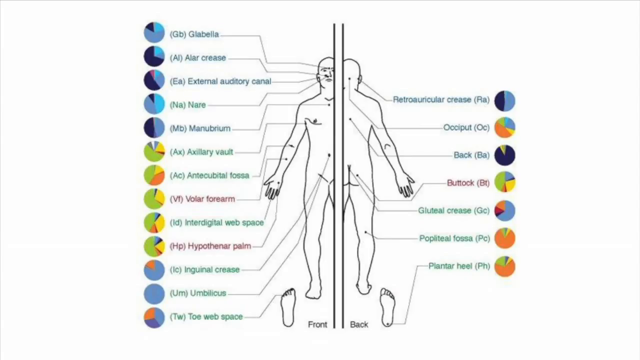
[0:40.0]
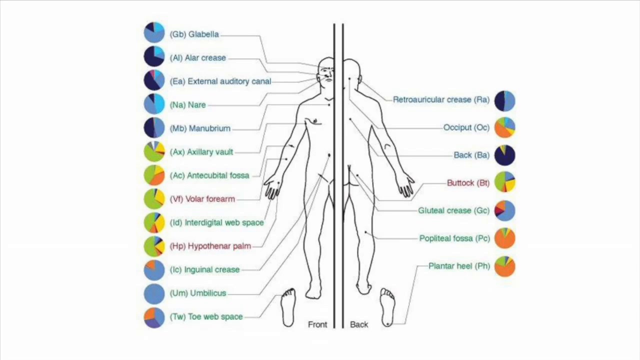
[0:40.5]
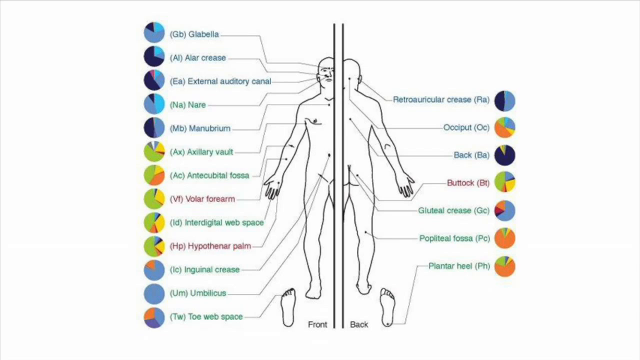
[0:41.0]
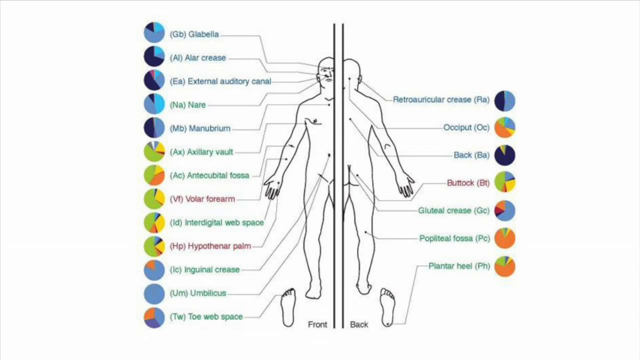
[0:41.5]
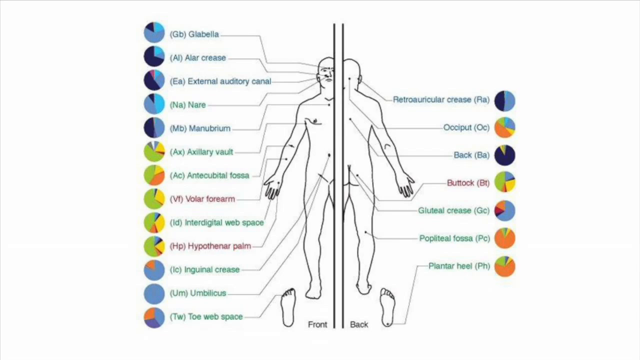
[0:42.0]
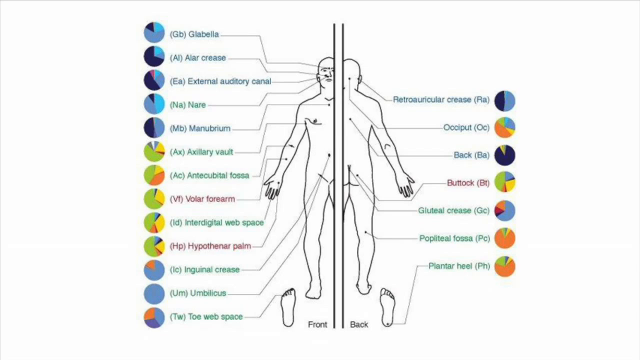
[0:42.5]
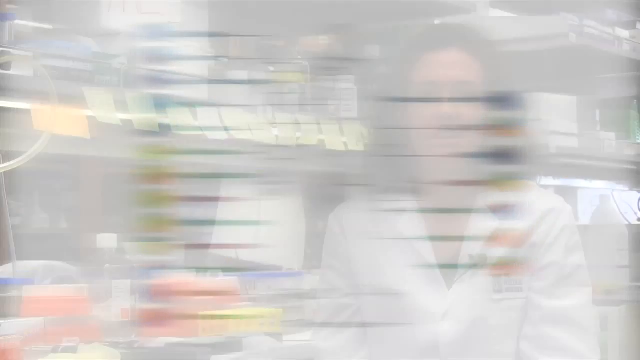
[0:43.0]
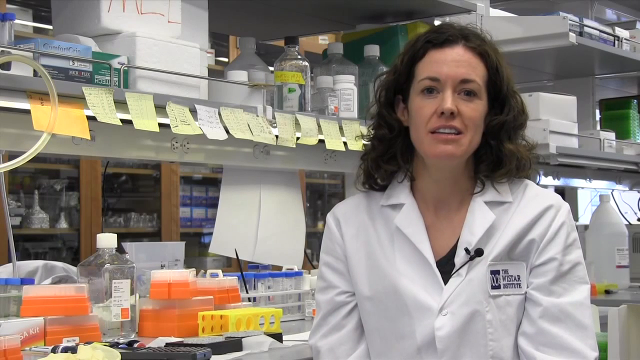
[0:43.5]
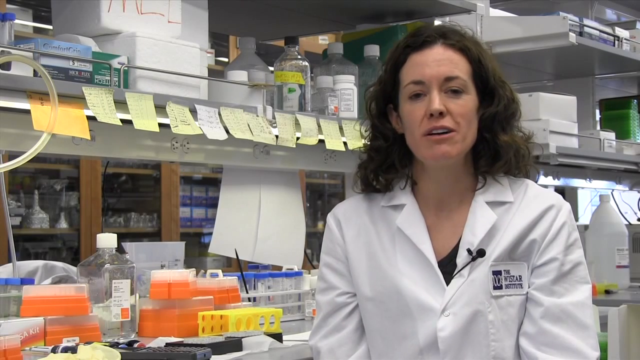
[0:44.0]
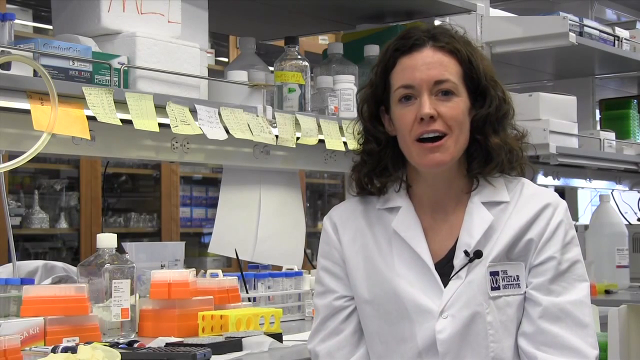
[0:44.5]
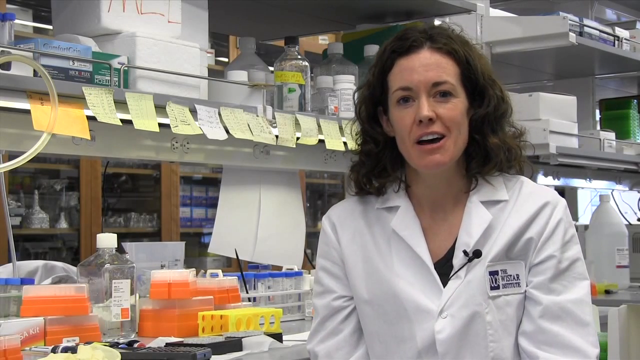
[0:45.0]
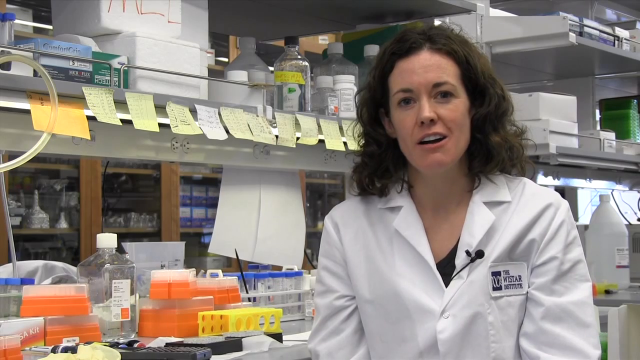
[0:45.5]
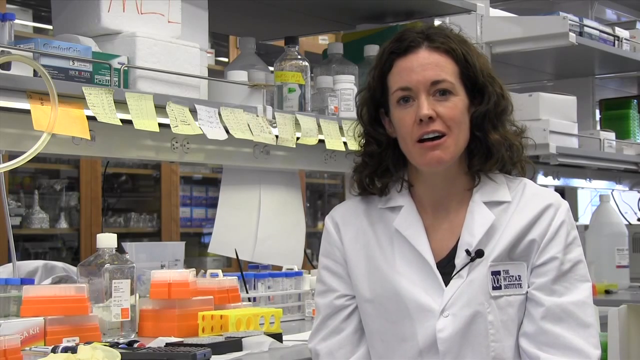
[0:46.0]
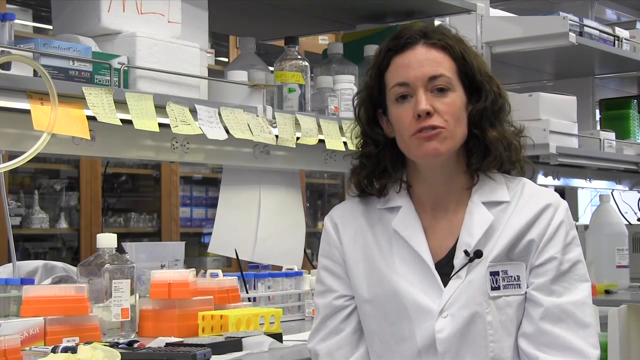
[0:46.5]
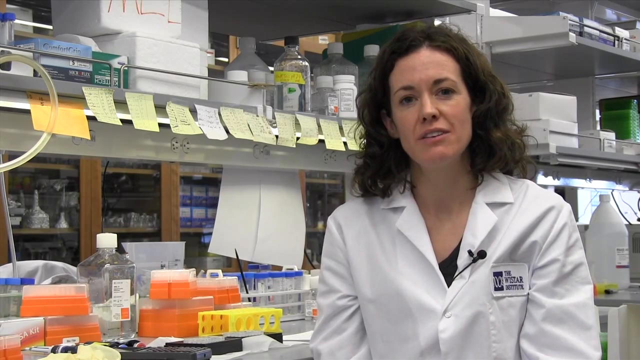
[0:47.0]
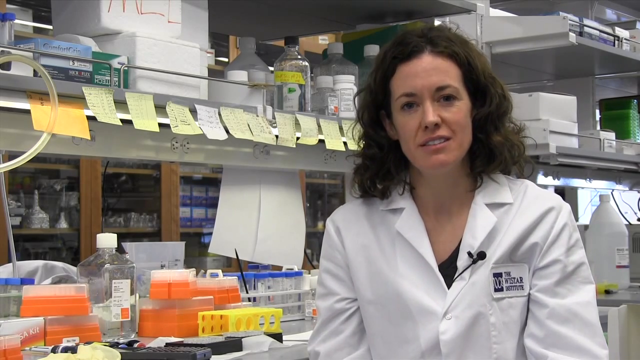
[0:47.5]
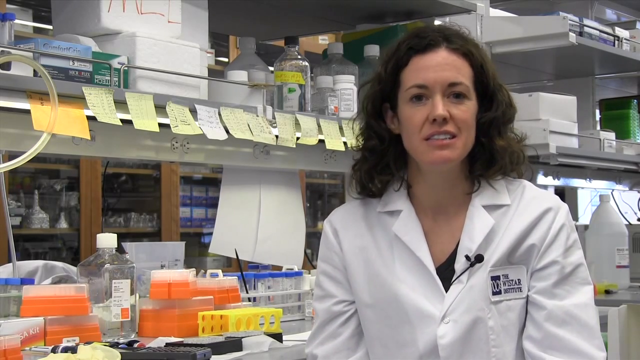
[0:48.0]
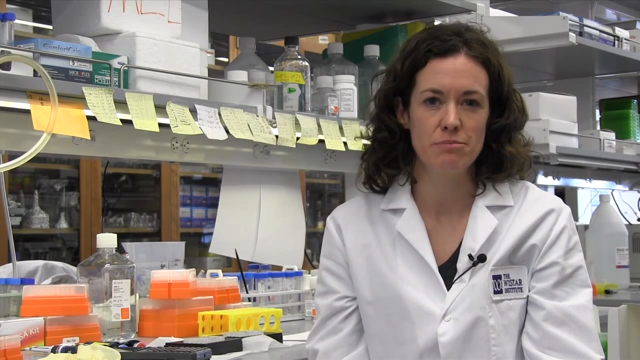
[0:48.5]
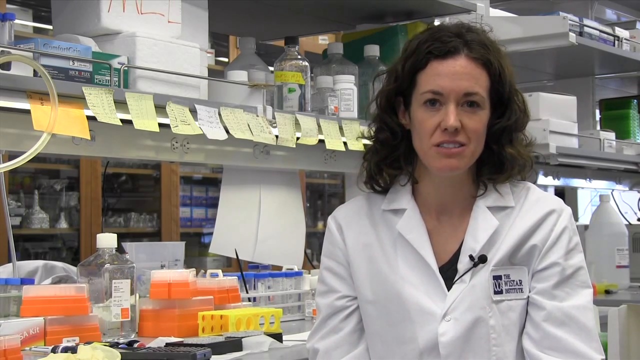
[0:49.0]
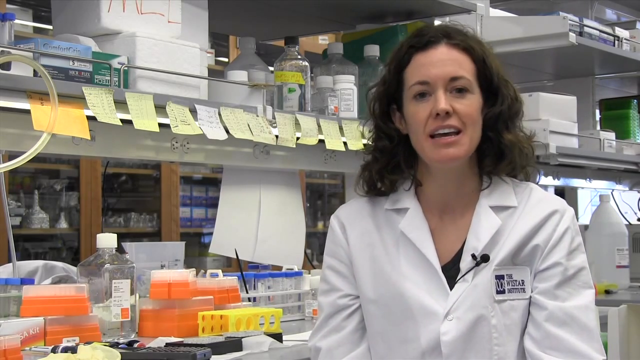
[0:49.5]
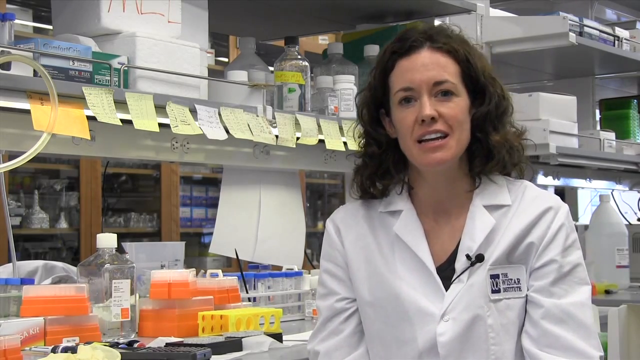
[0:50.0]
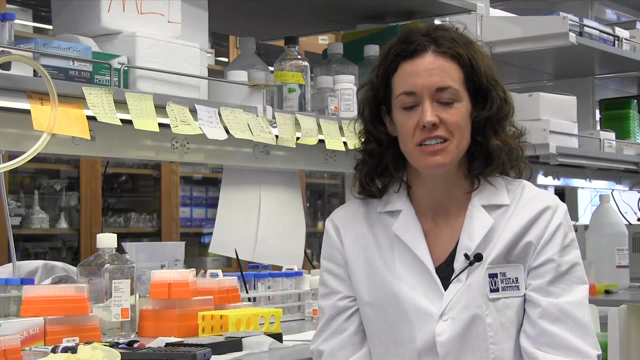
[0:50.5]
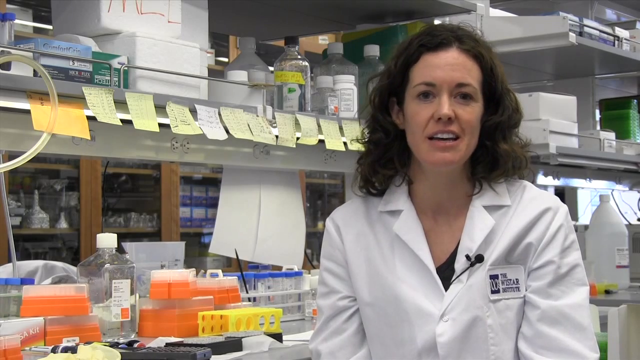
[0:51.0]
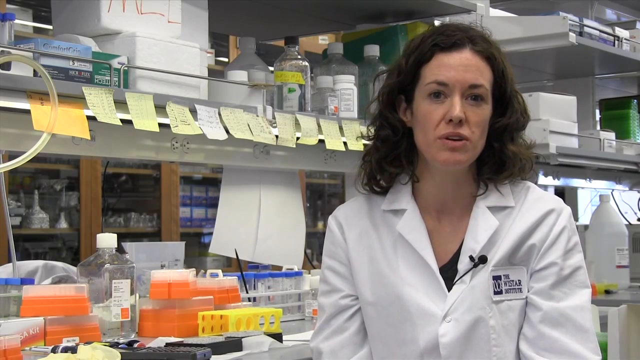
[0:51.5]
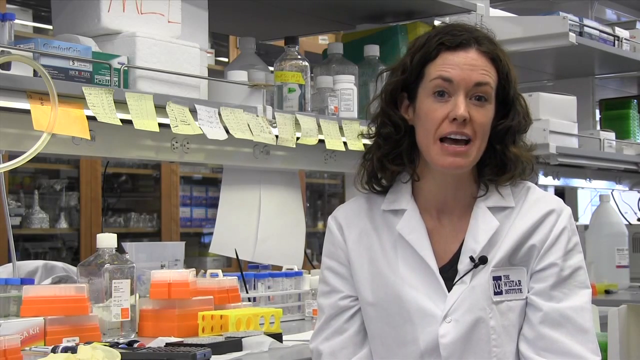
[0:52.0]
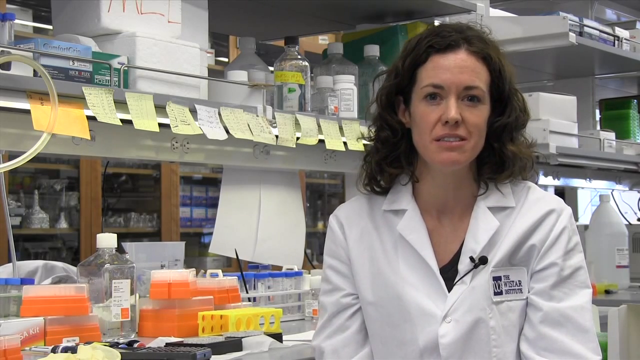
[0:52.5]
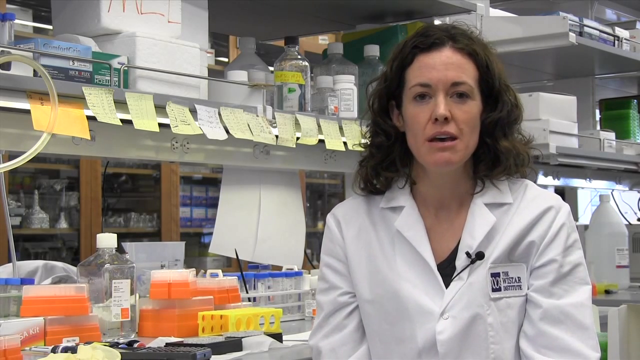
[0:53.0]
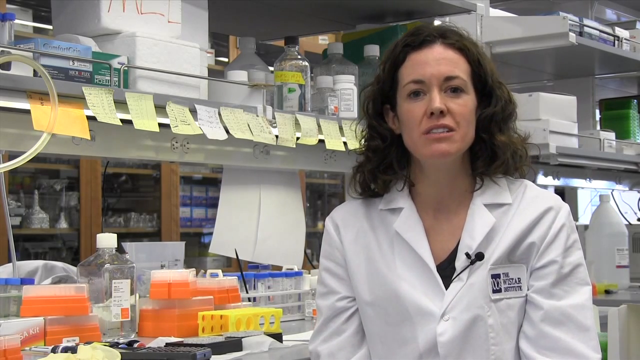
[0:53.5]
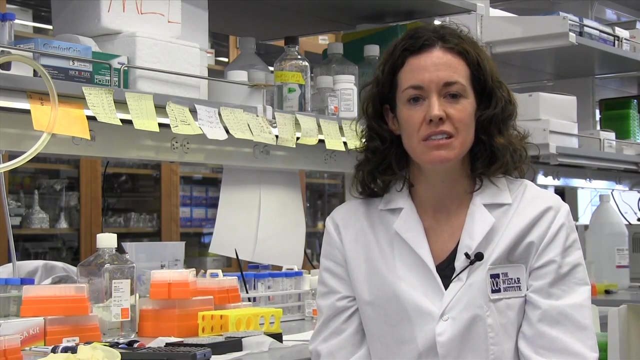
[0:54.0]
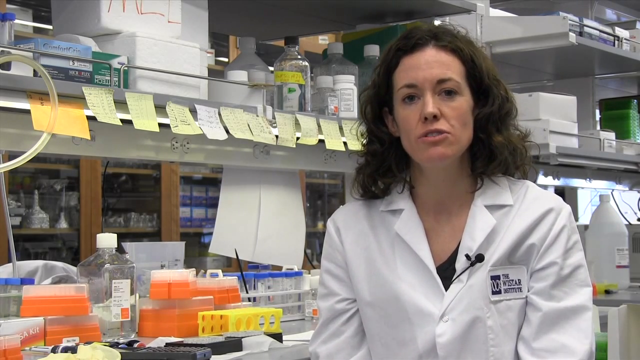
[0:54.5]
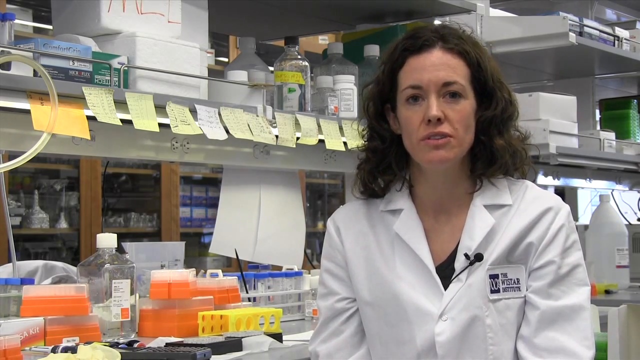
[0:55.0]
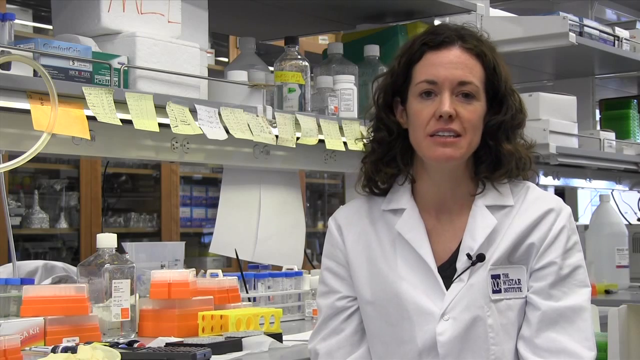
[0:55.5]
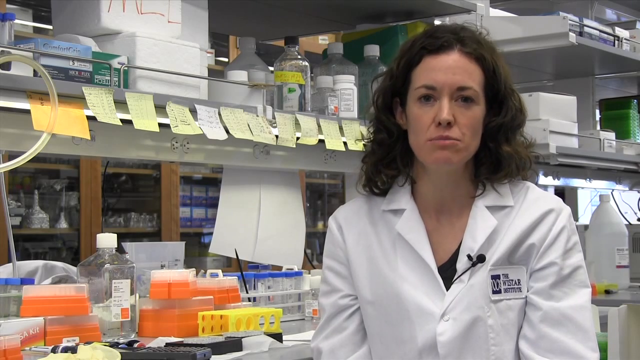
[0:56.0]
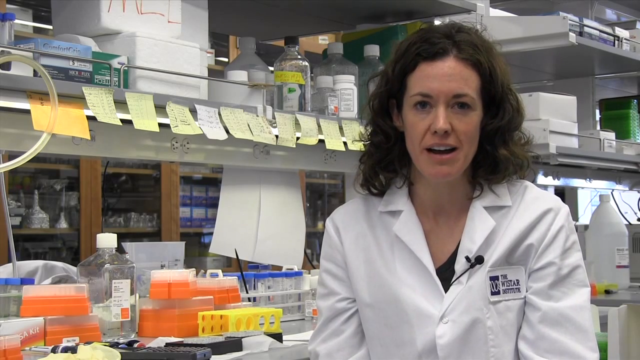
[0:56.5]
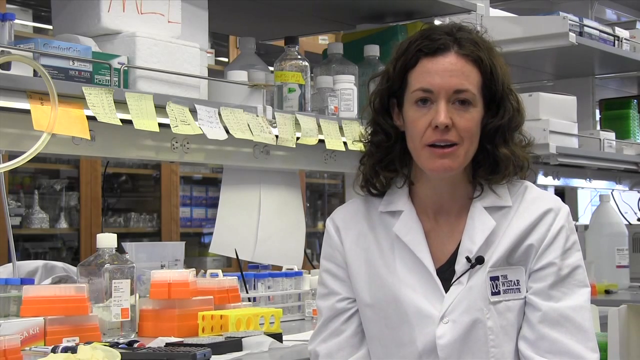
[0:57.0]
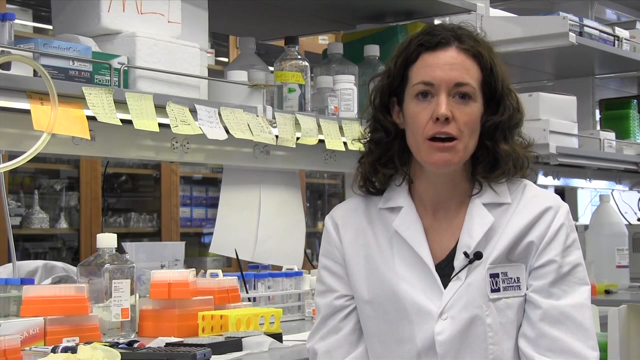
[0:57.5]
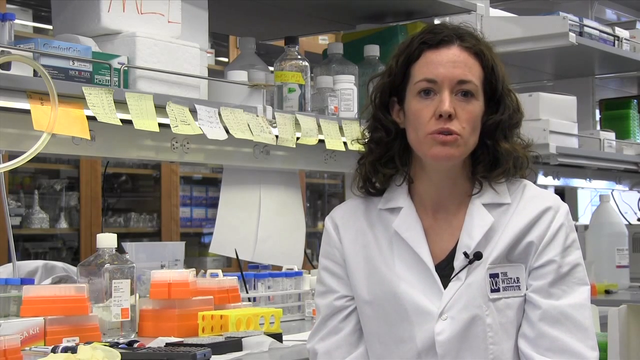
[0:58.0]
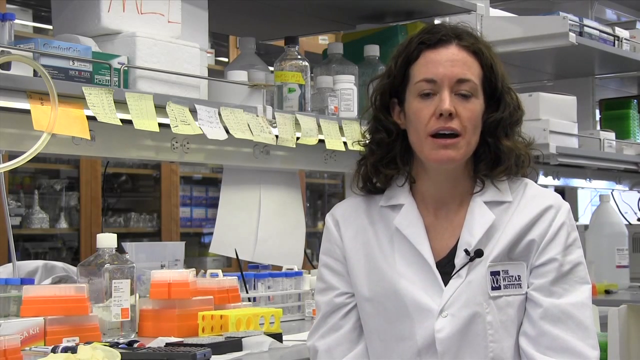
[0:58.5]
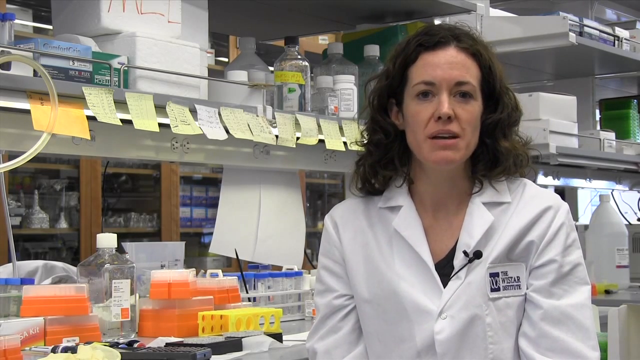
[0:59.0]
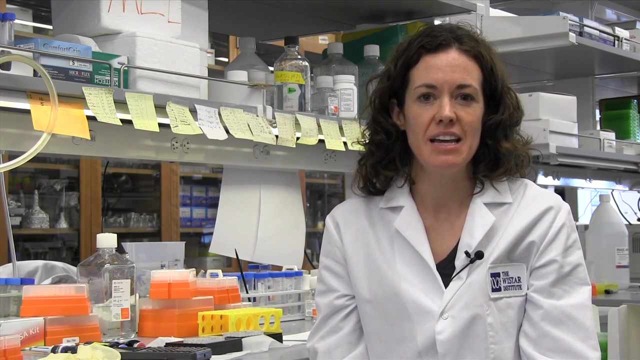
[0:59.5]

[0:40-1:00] In the diagram, tiny pie charts sit beside each line of text. On the left is a front view of a body, cut in half by a line down the middle, so only half of the body is seen. Probably 12 lines of text in different colors label parts of the body, pointing to the head, the arms and on down the body, with a colorful pie chart to the left of each line. The top five are in more blue tones, the middle ones more green, orange and yellow, and the bottom ones return to blue tones. The bottom of a foot appears to the lower left of this body outline. On the right side is a back view, a cartoon outline of a man, with another foot shown low. About seven or eight text labels are on this side, with small black lines pointing to the referenced body parts and small pie charts in different colors to the right of the text. The video then switches back to the woman talking in the lab, positioned a little right of center, and she continues talking.